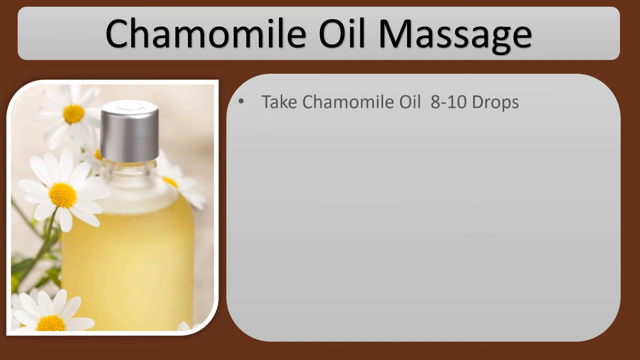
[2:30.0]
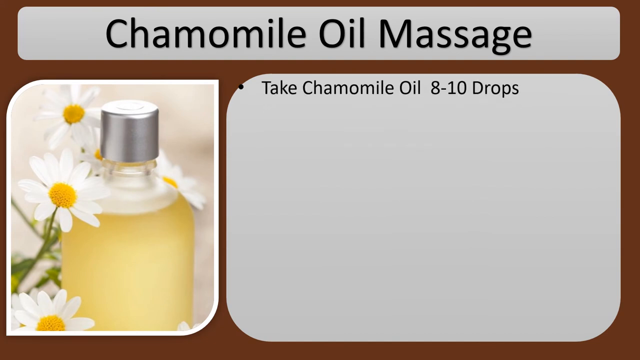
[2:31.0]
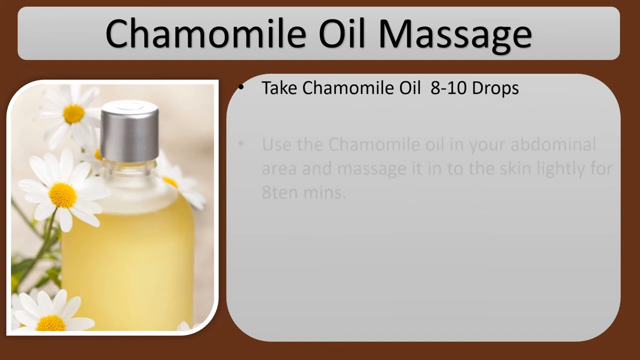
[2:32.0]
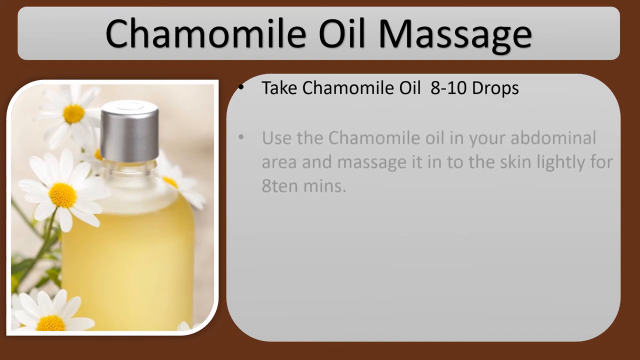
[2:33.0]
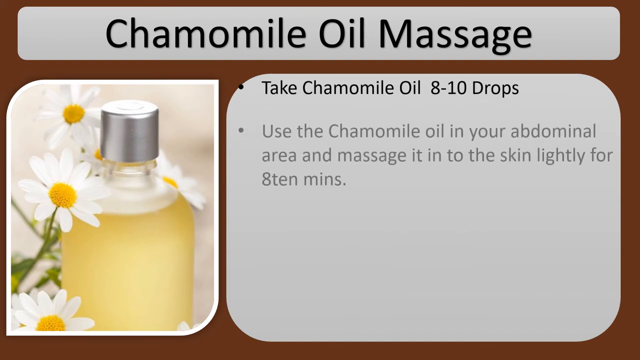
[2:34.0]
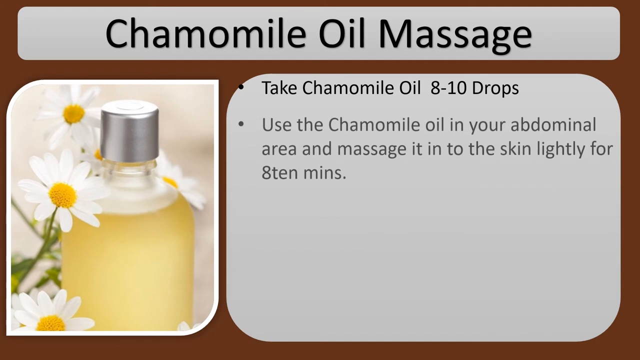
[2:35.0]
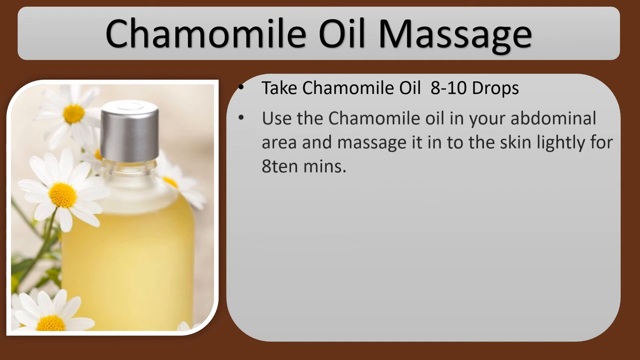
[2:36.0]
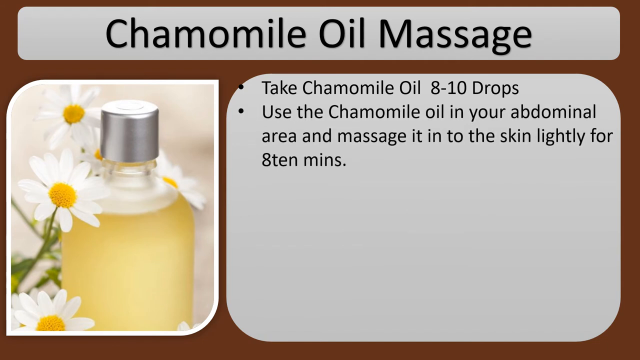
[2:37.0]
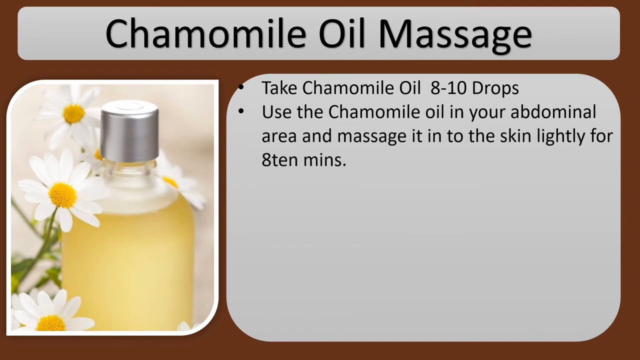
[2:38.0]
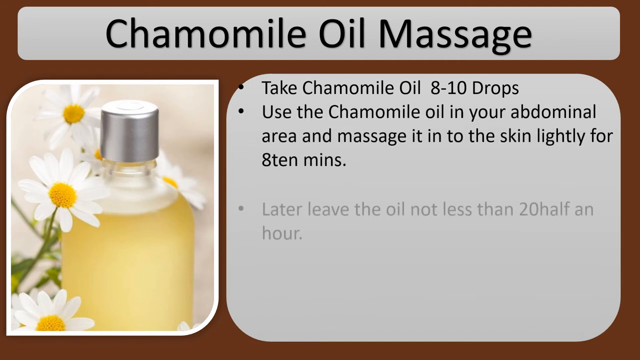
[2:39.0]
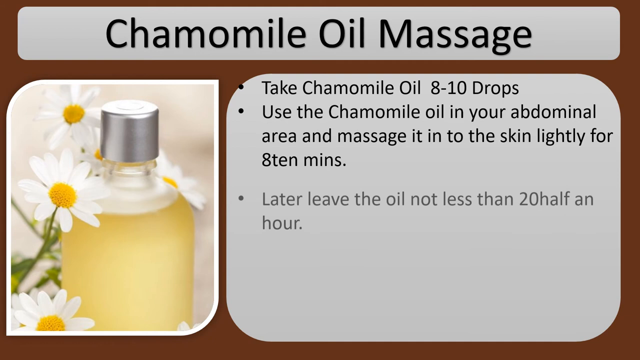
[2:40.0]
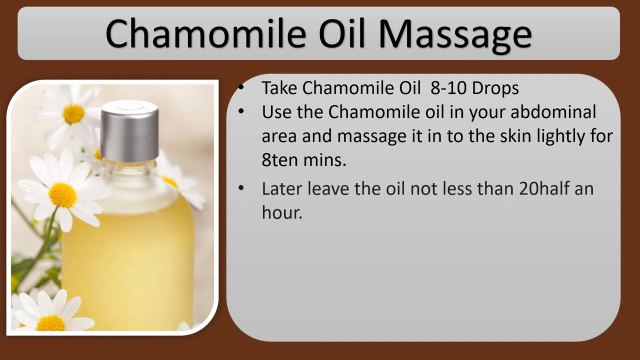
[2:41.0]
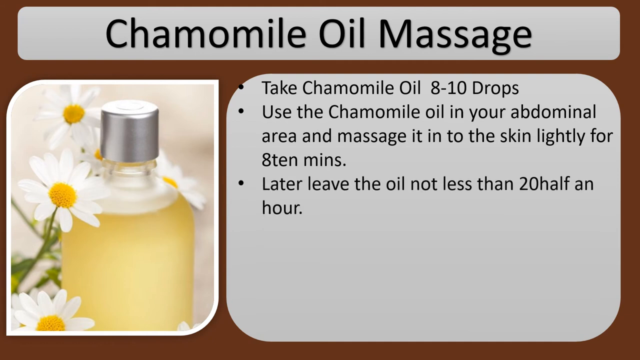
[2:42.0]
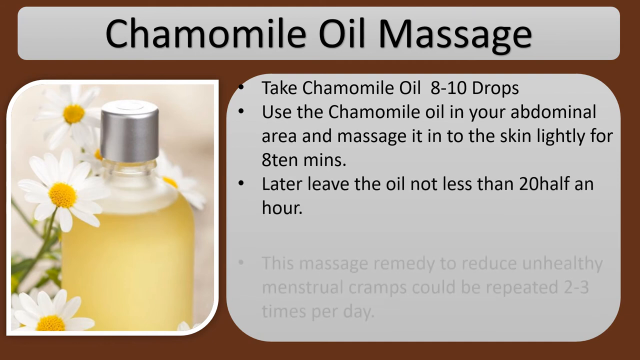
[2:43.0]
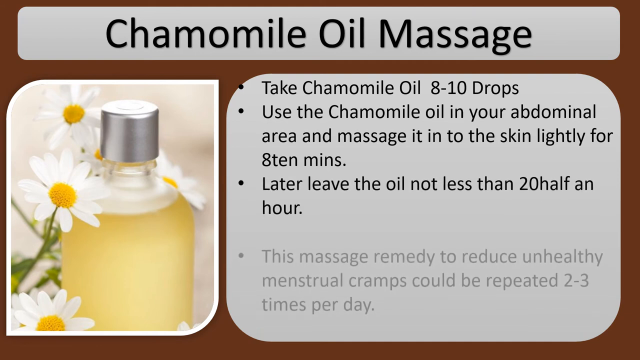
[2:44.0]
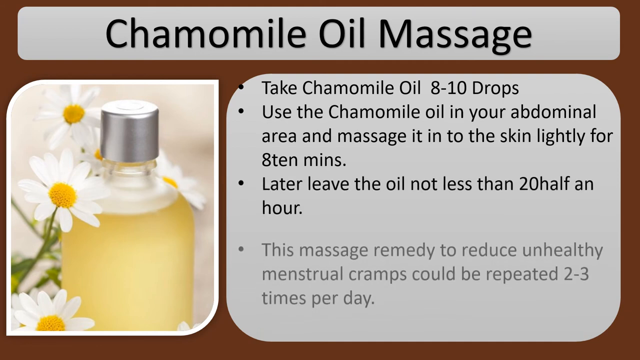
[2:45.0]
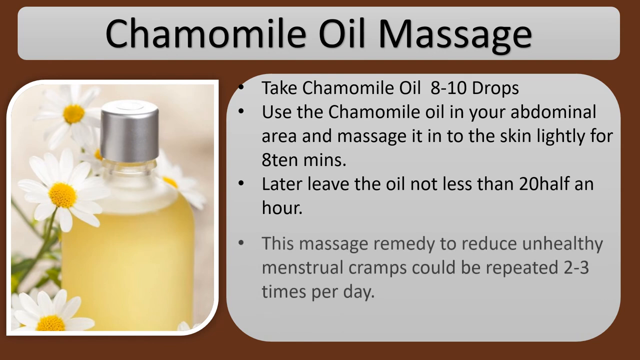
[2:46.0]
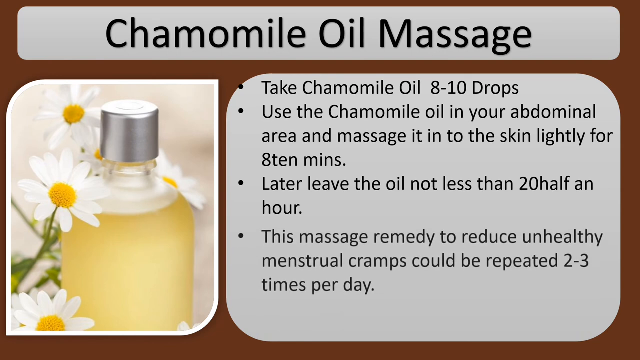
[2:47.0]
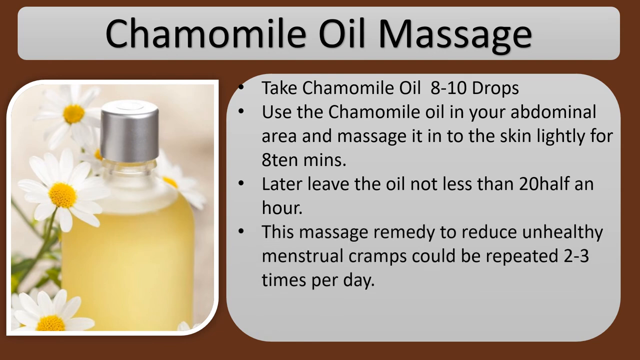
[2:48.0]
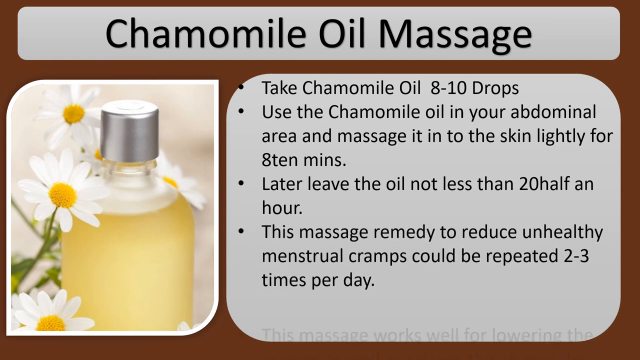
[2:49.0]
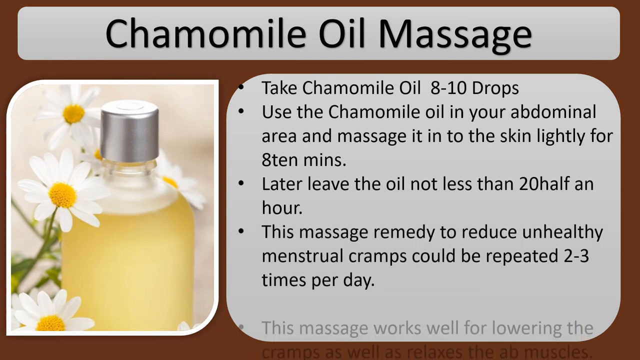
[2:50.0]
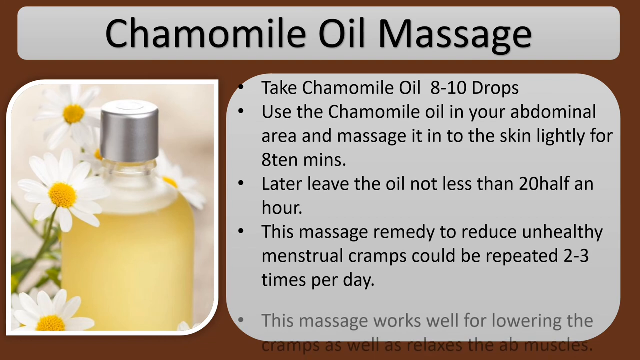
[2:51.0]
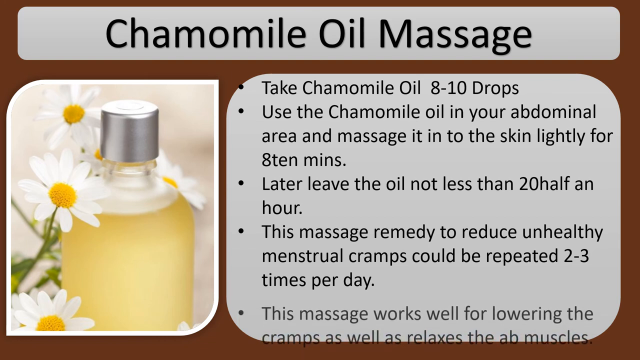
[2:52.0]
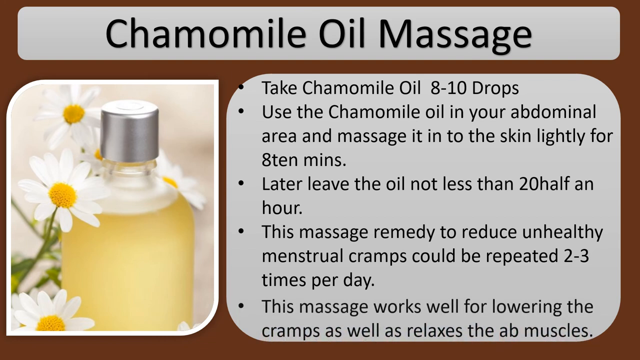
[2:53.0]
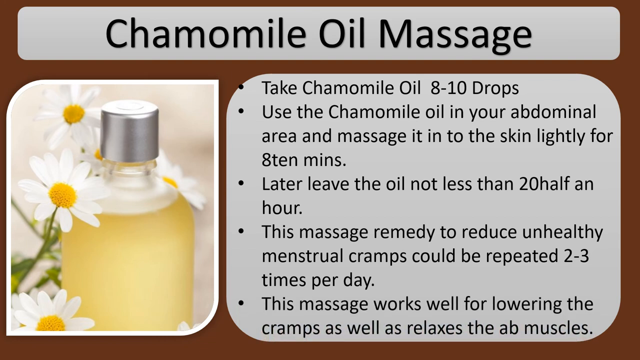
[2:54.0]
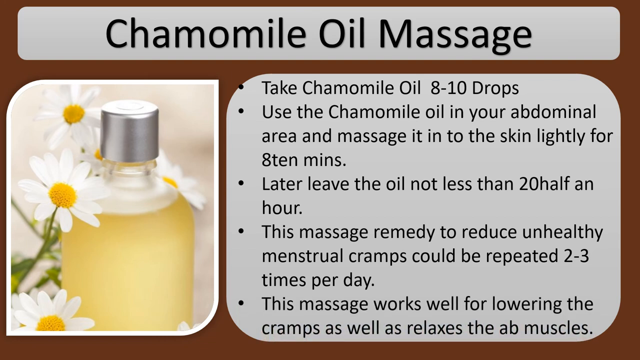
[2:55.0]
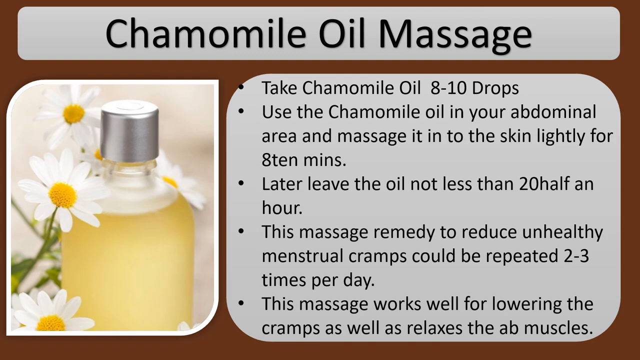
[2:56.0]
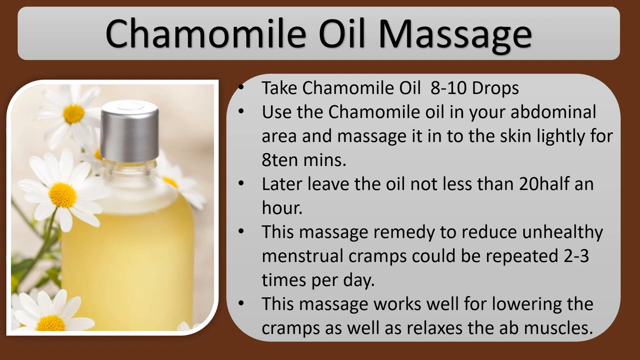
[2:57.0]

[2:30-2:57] A new slide for a chamomile oil massage appears, a remedy that is not a drink. On the left side is a small frosted glass bottle with a silver cap on top, filled with a yellow liquid that is presumably the oil, with three daisies lying over it. Bullet points come up: "take chamomile oil 8-10 drops," "Use the chamomile oil in your abdominal area and massage it in to the skin lightly for 8-10 minutes," "Later leave the oil not less than 20 minutes to half an hour," and "This massage remedy to reduce unhealthy menstrual cramps could be repeated 2-3 times per day." The next point reads "this massage works well for lowering the cramps as well as relaxes the ab muscles."